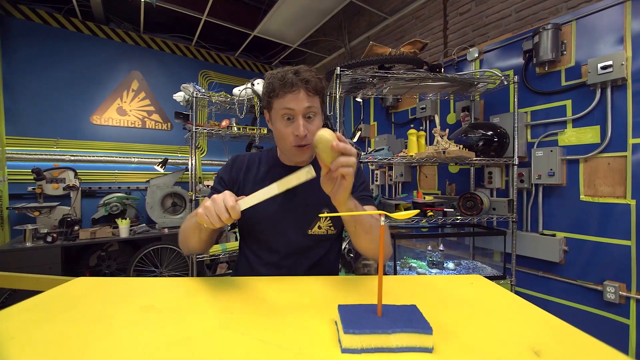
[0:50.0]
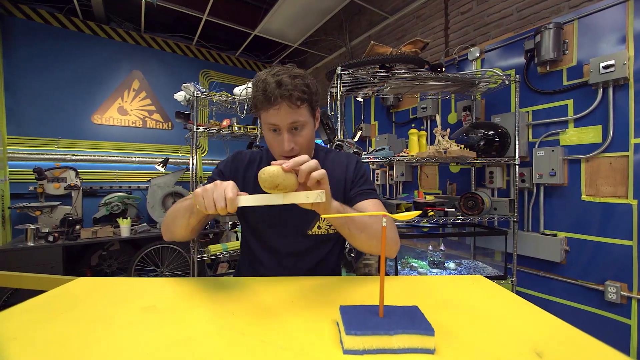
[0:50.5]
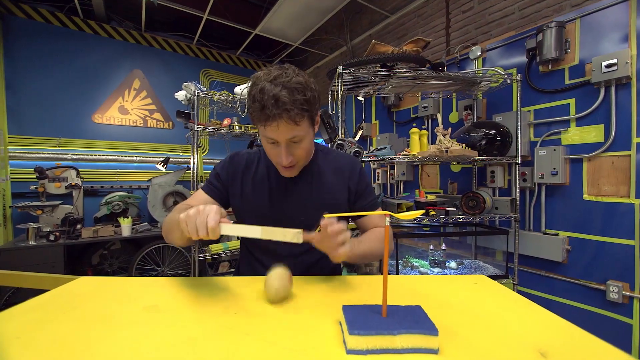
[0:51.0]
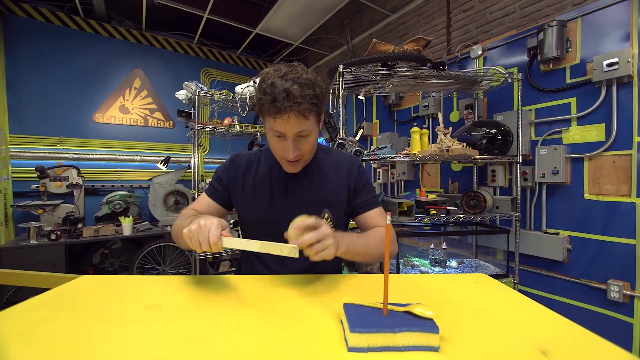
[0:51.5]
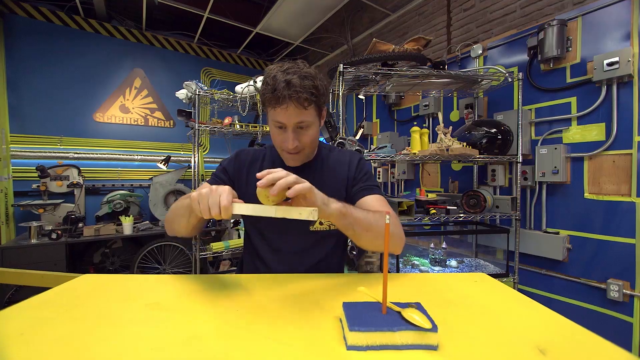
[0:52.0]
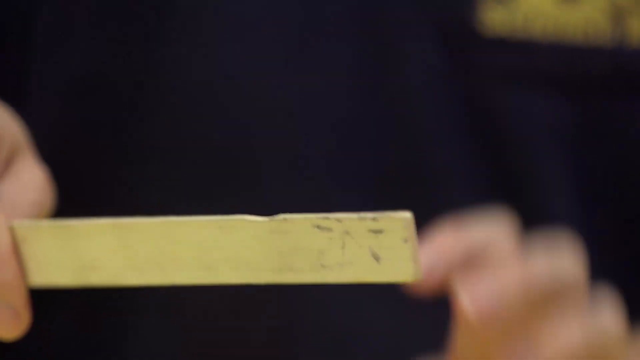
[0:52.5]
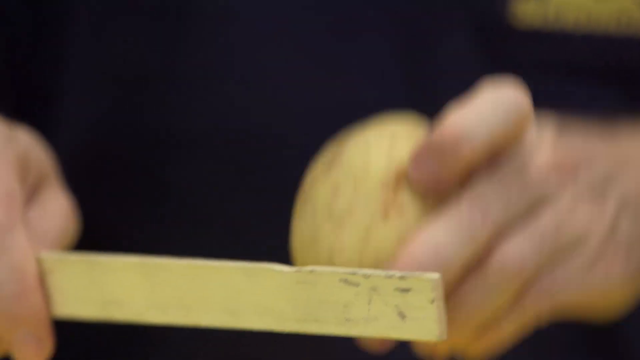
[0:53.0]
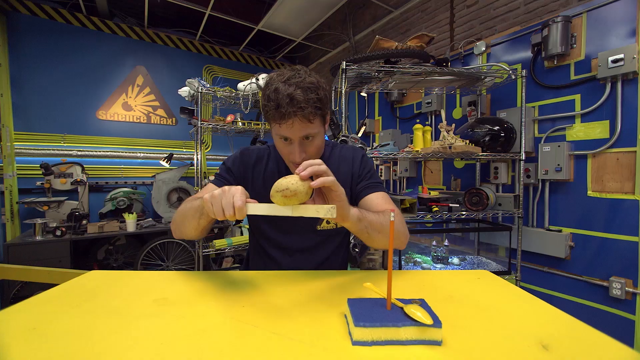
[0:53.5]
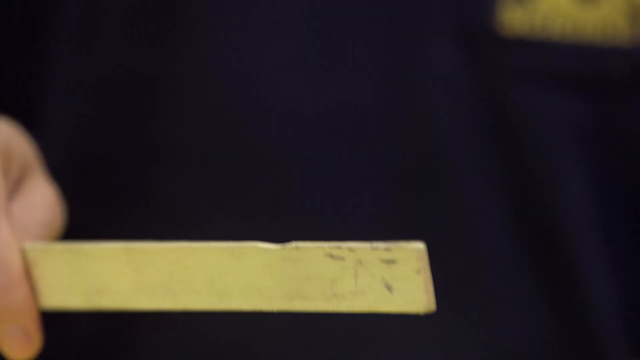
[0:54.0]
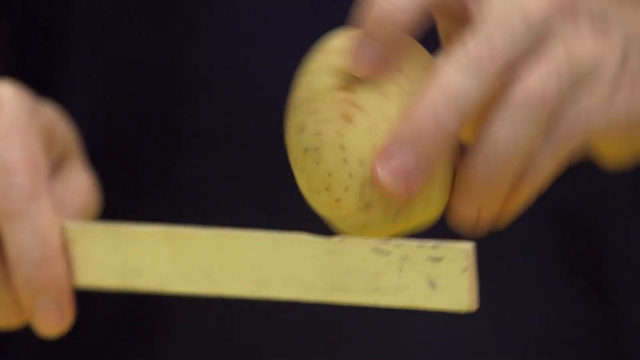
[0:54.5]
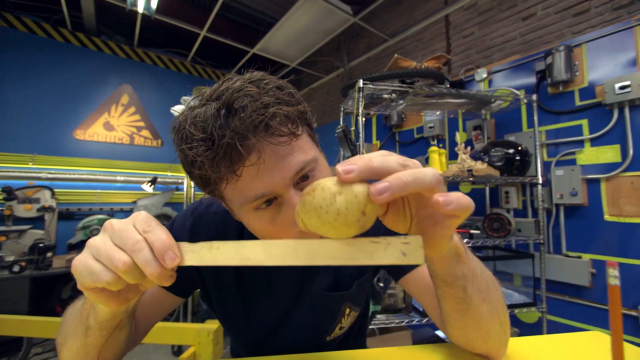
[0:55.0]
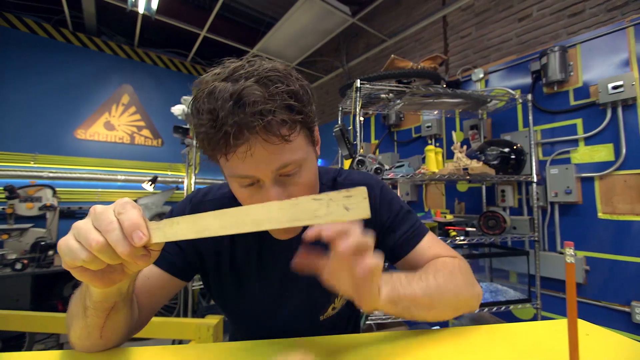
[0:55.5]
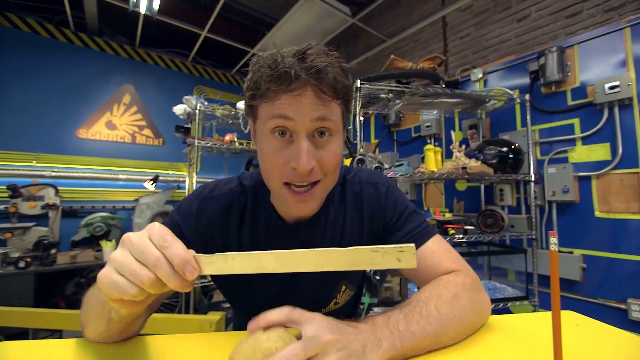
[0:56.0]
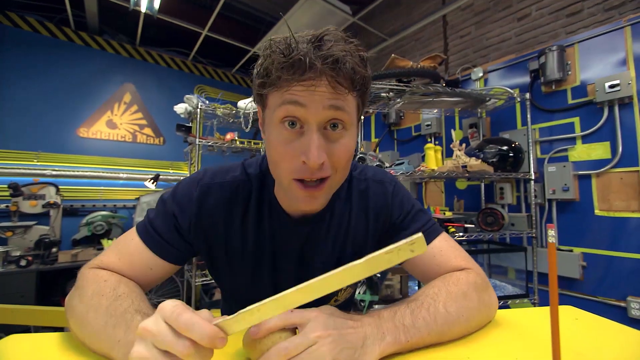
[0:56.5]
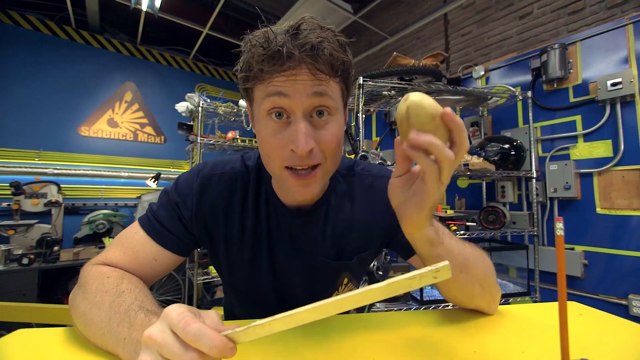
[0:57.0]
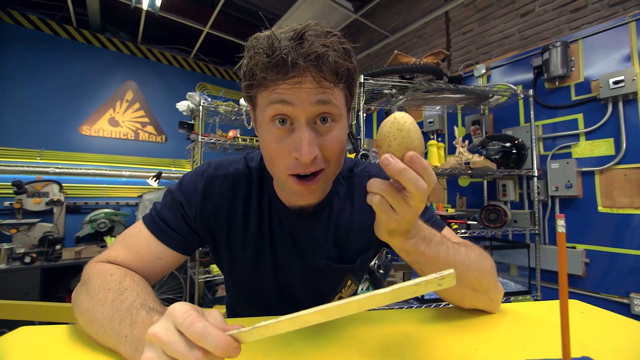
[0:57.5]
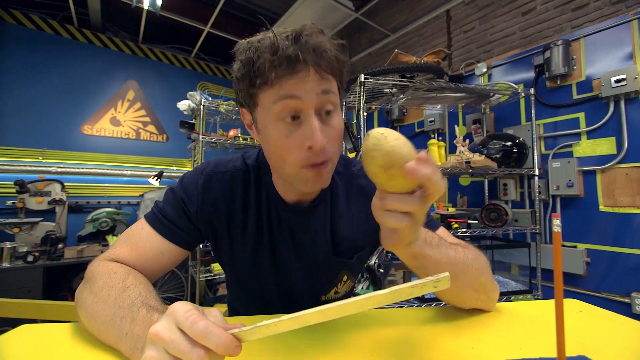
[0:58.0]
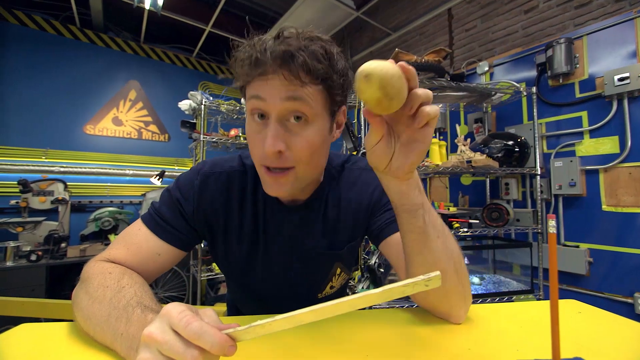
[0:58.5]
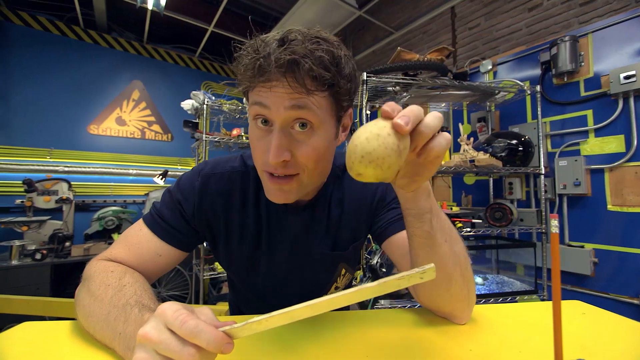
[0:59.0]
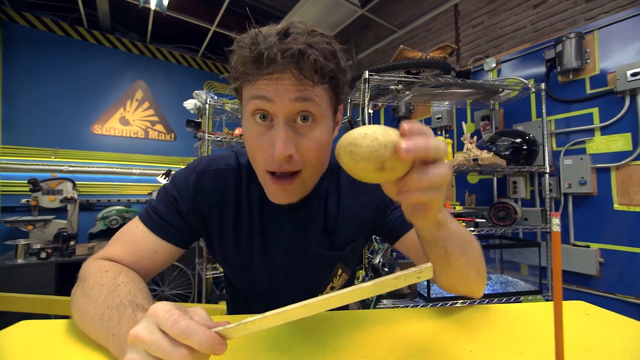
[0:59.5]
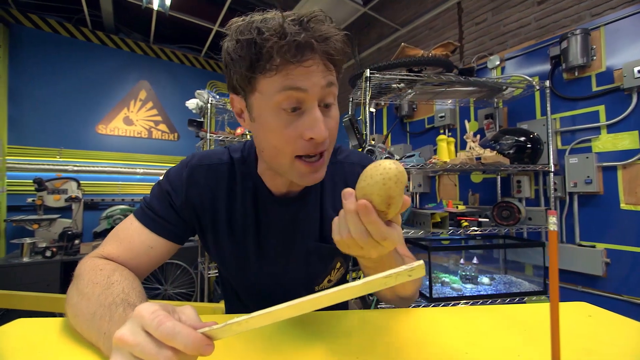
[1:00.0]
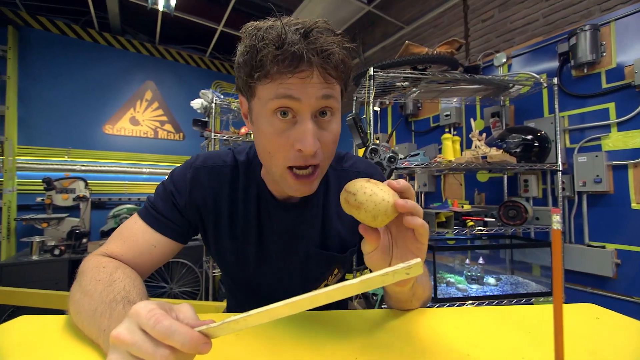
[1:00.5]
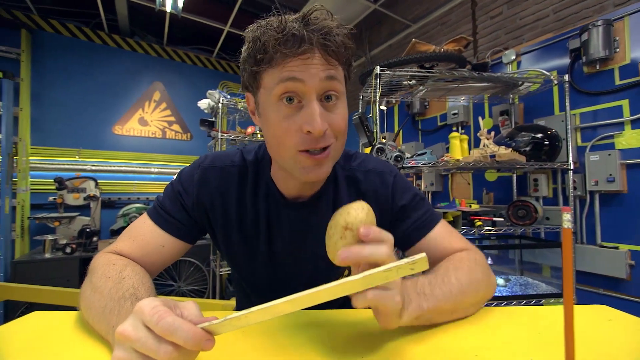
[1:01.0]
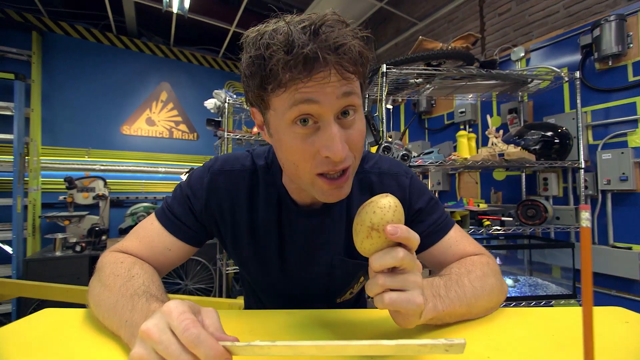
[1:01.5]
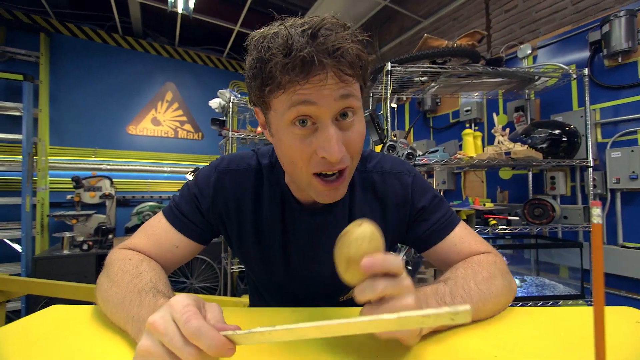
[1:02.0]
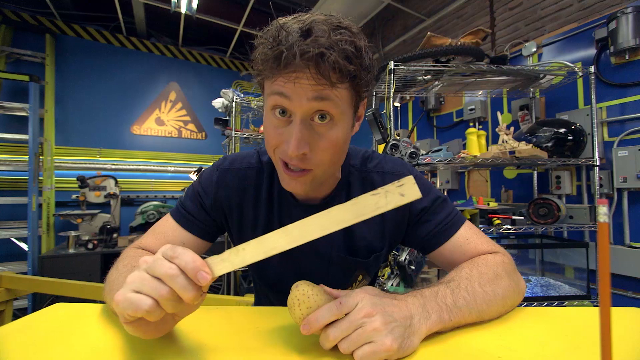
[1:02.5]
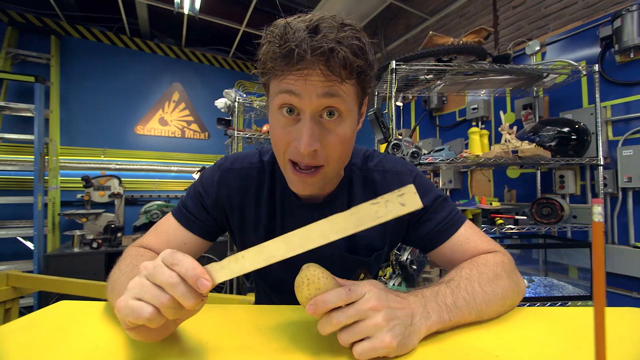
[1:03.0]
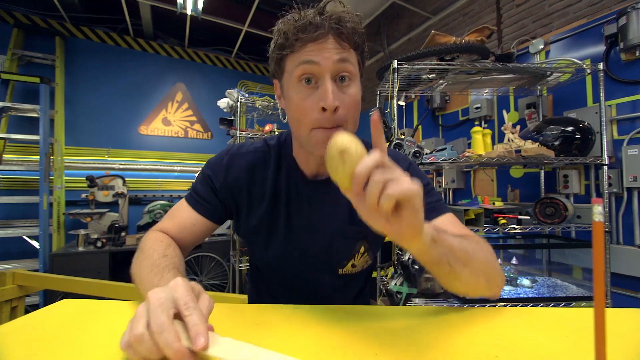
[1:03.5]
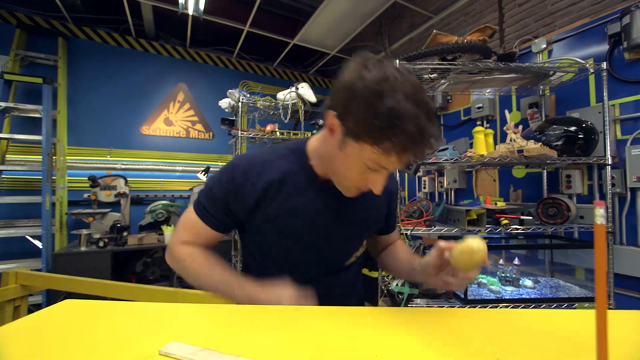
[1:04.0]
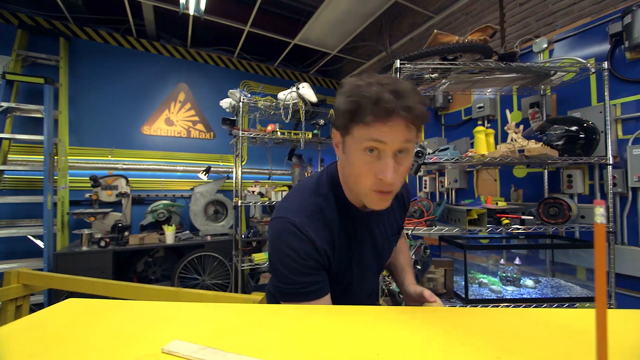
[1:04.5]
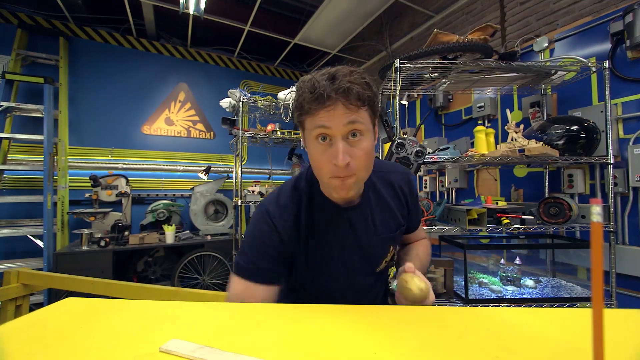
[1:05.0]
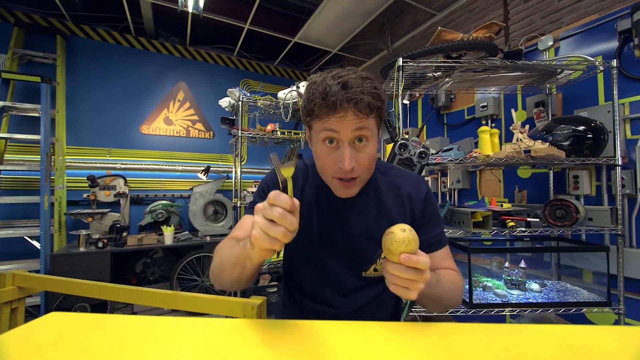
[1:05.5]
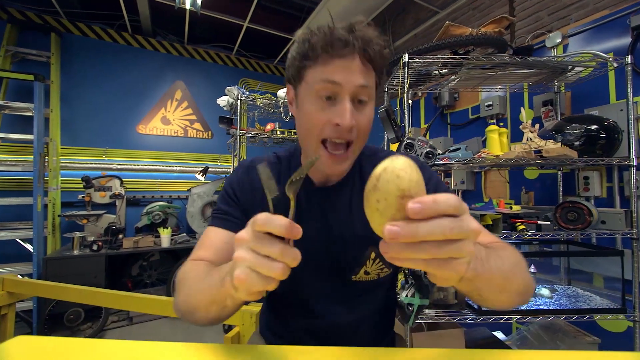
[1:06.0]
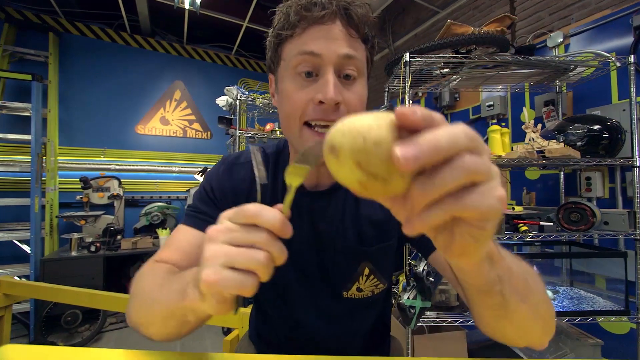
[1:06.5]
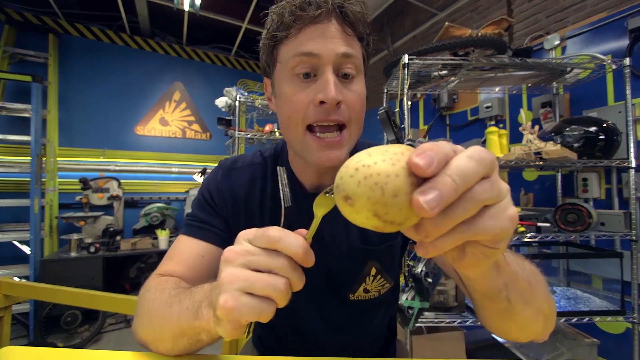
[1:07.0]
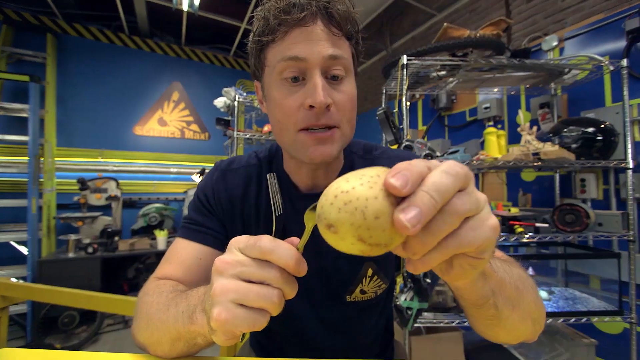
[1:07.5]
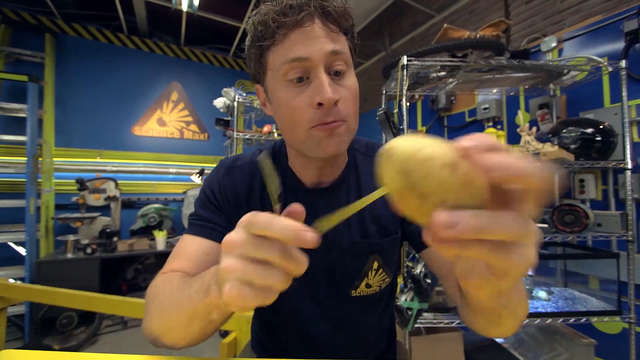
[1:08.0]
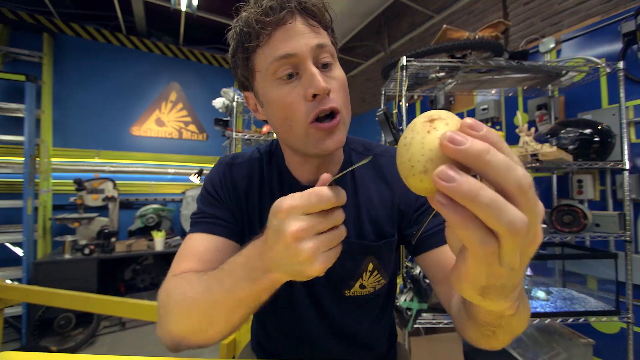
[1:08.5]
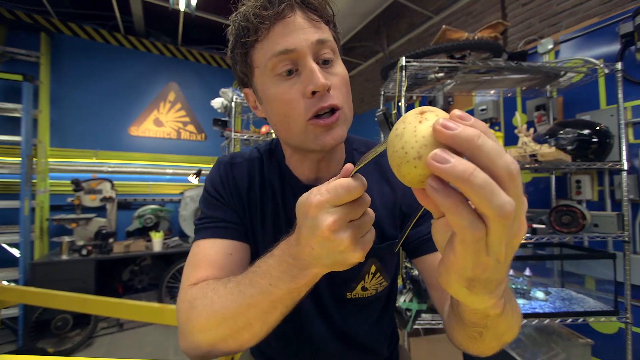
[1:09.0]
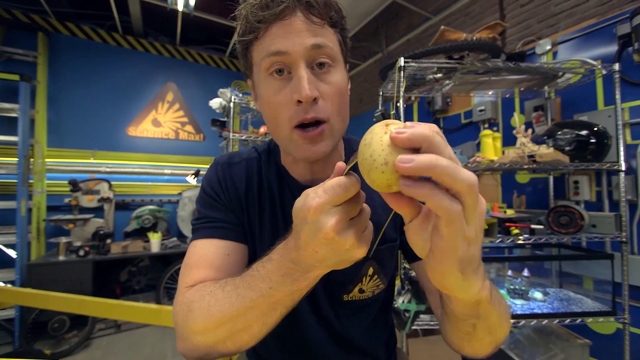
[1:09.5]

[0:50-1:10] A man stands in front of a yellow table. On the right side of the table is a blue pad with a pencil placed vertically on it, and a yellow spoon placed precariously on the eraser head of the pencil. In the foreground, the man in a dark blue shirt holds a ruler up in his right hand and a potato up in his left. With a surprised look on his face, he points the ruler at the potato, then tries to place the potato on top of the ruler, but the potato topples to the right and falls onto the table. As the potato slams into the table, the spoon falls off the pencil. The man picks the potato up and tries to put it on the edge of the ruler again but fails, then tries to balance it once more and fails again. The video zooms in each time he tries to put the potato on the ruler, getting in close as he tries again and the potato falls again. The man leans in, looks at the camera and begins speaking. He raises the potato in his left hand and brings the ruler down in his right. He seems amused as he continues speaking, looking to the left at the potato and then pointing the potato at the camera with his left hand. He looks at the potato again before returning his gaze to the viewer, nods his head and smiles as he continues to speak. He points up, steps back and looks down, then reaches down with his right hand and pulls out two forks. He raises the forks to the side of the potato and sticks them into both sides of it.